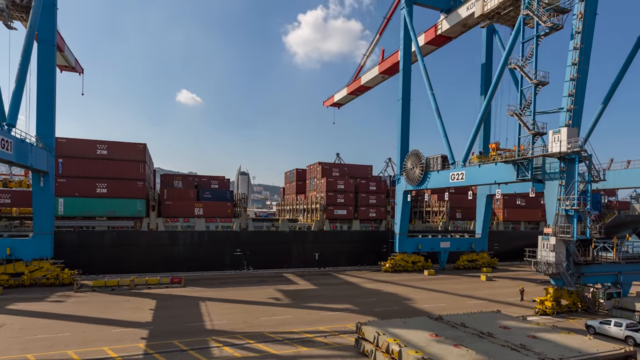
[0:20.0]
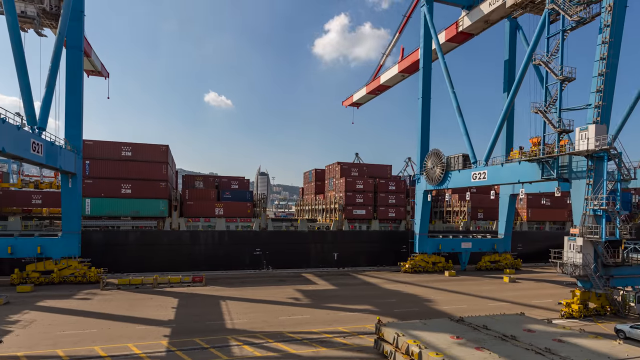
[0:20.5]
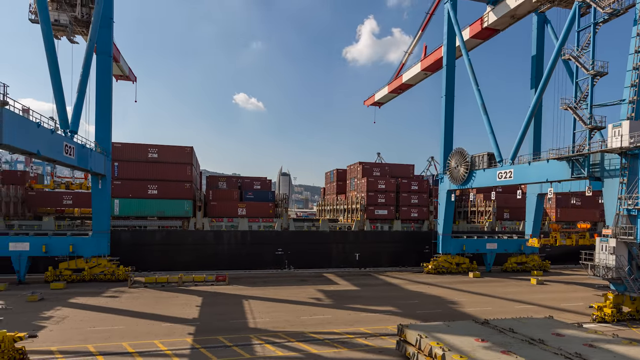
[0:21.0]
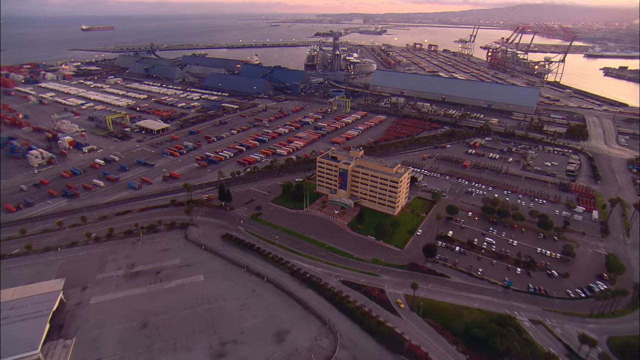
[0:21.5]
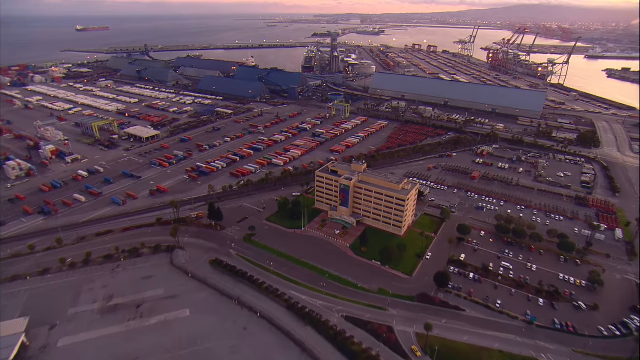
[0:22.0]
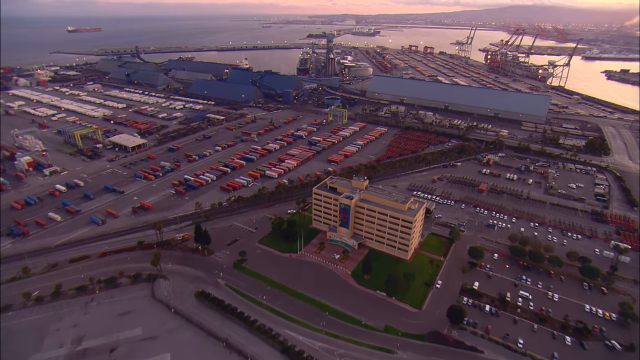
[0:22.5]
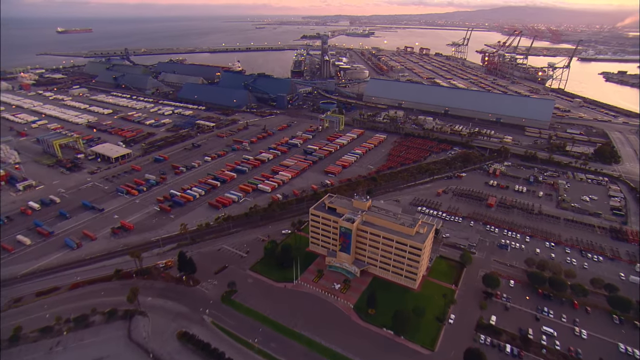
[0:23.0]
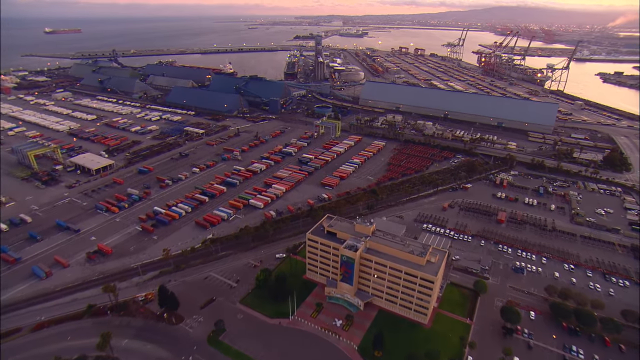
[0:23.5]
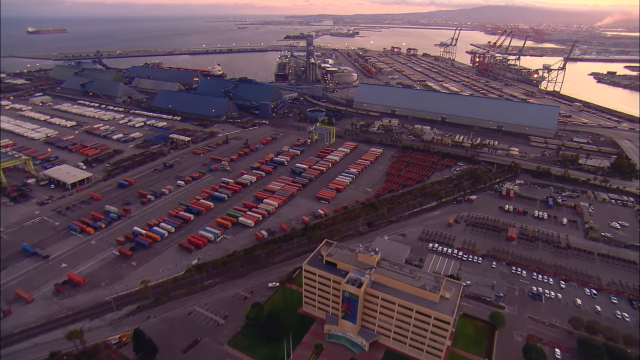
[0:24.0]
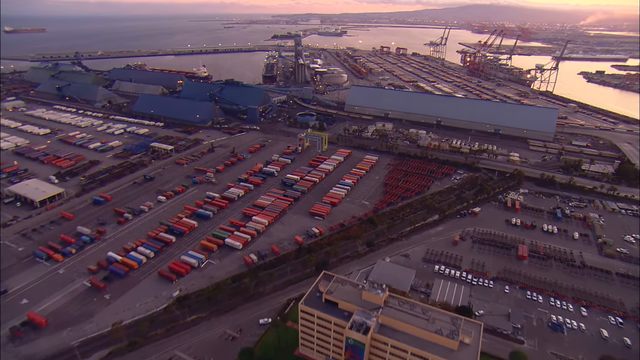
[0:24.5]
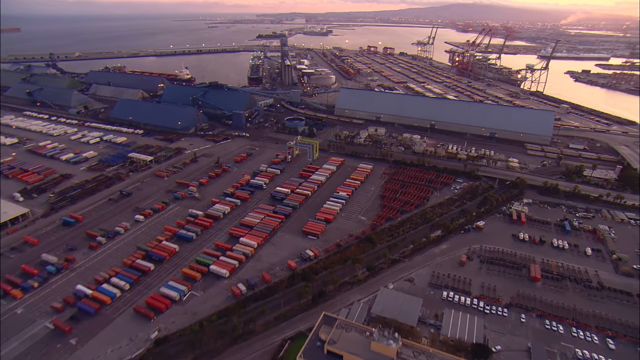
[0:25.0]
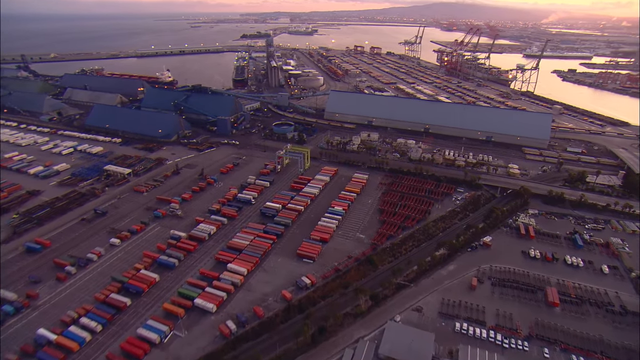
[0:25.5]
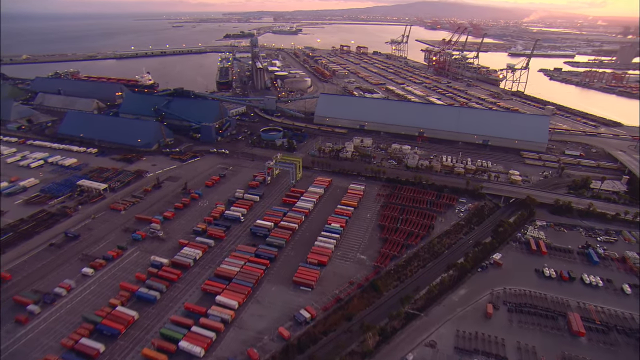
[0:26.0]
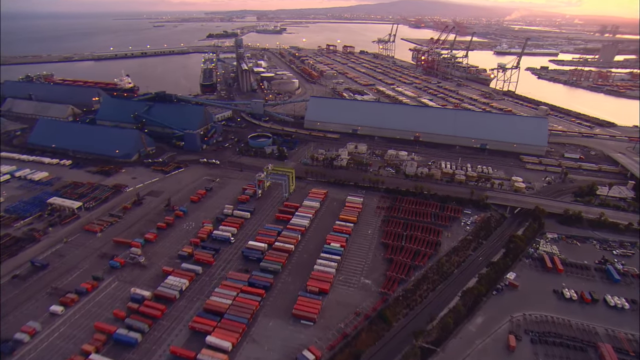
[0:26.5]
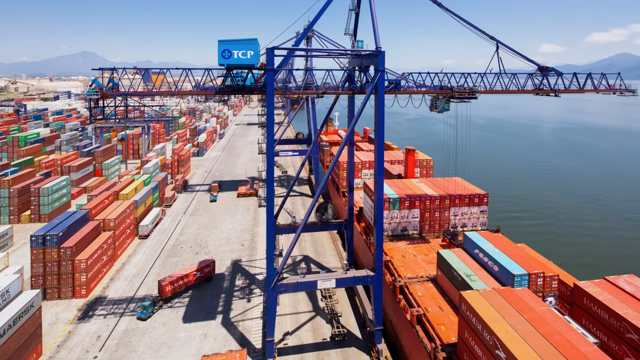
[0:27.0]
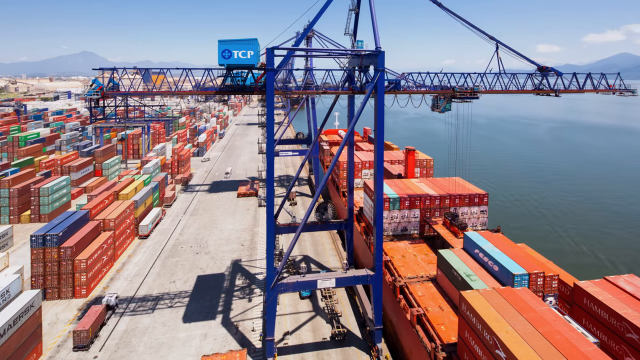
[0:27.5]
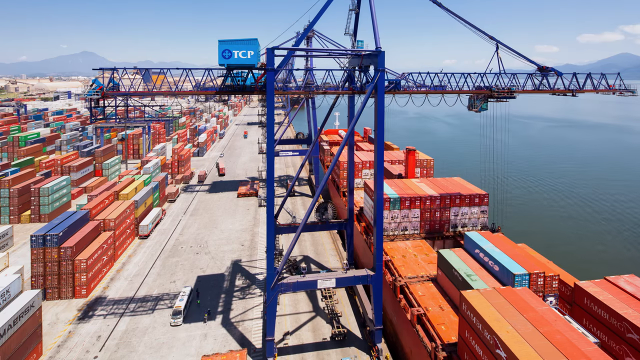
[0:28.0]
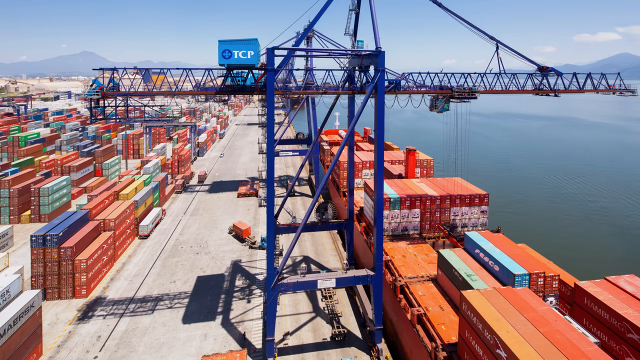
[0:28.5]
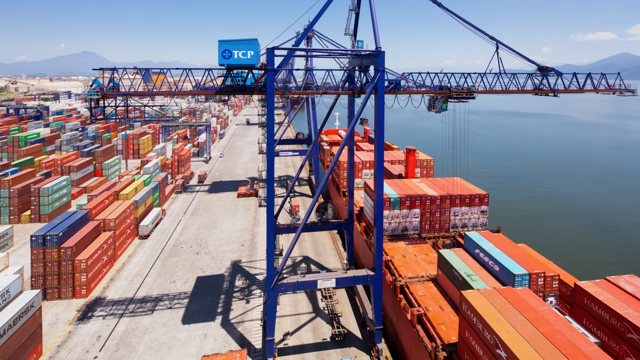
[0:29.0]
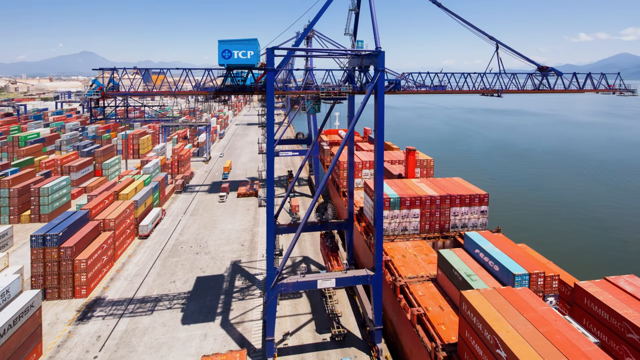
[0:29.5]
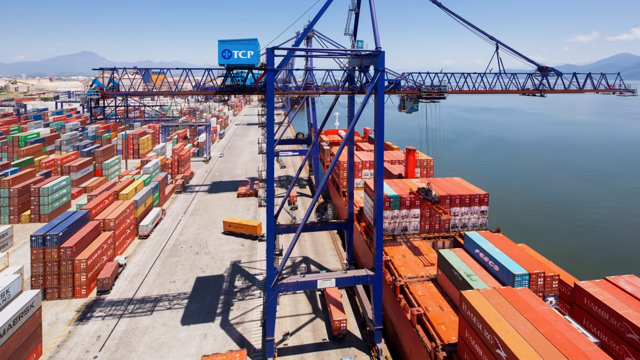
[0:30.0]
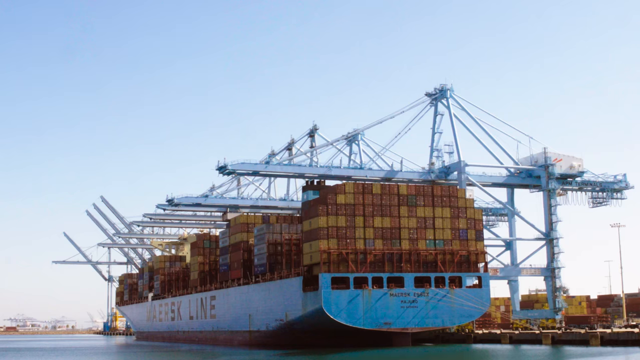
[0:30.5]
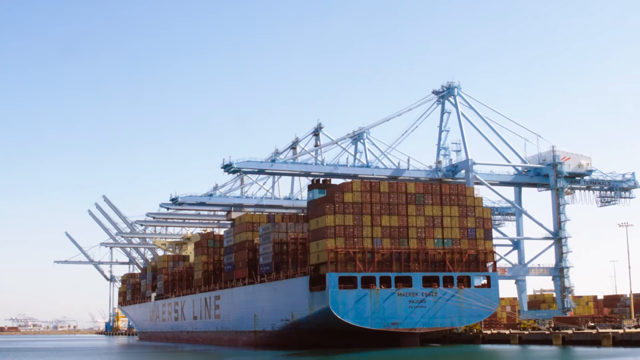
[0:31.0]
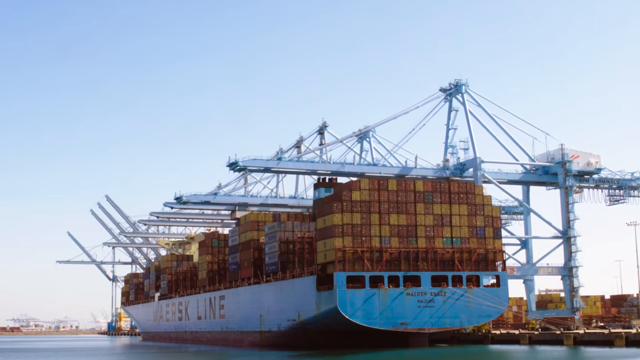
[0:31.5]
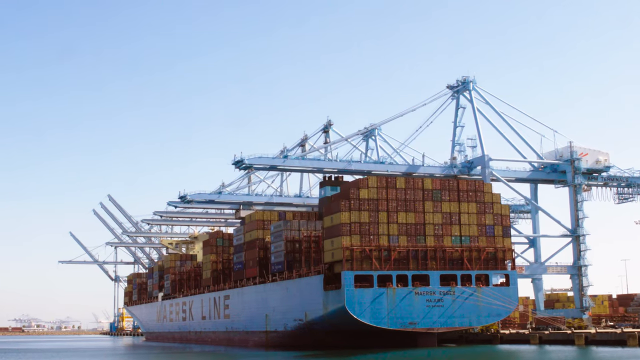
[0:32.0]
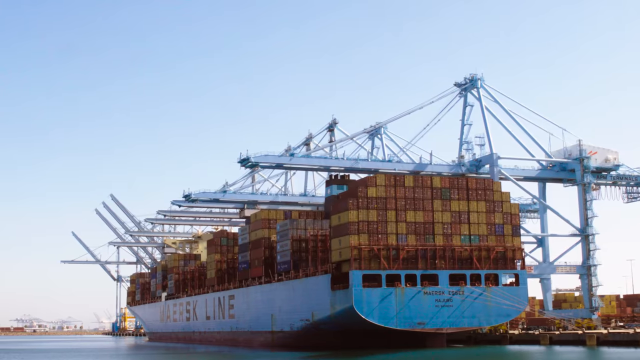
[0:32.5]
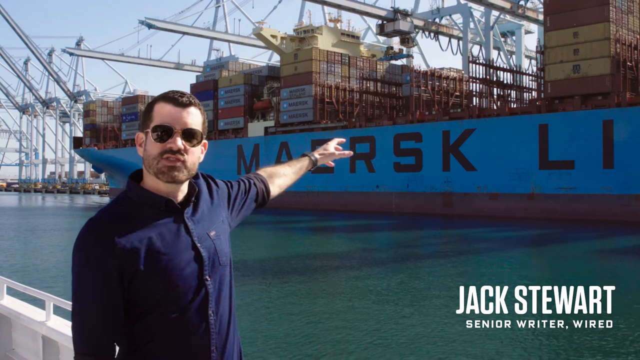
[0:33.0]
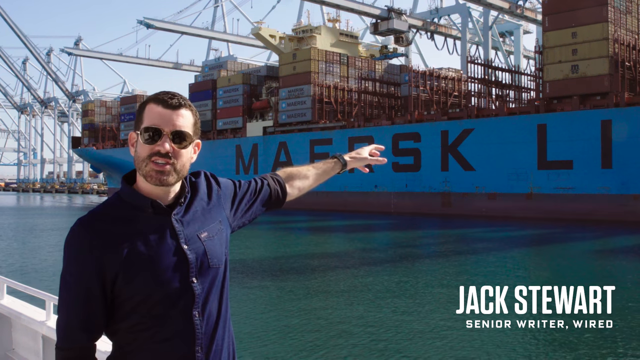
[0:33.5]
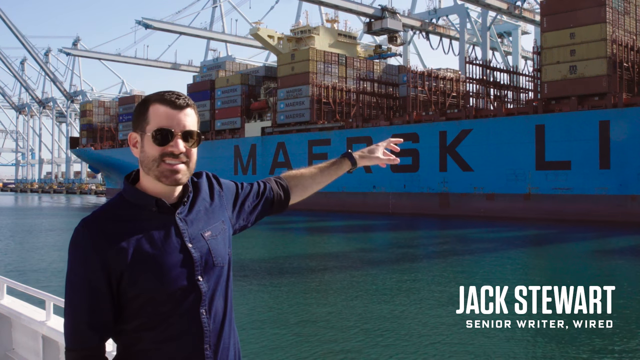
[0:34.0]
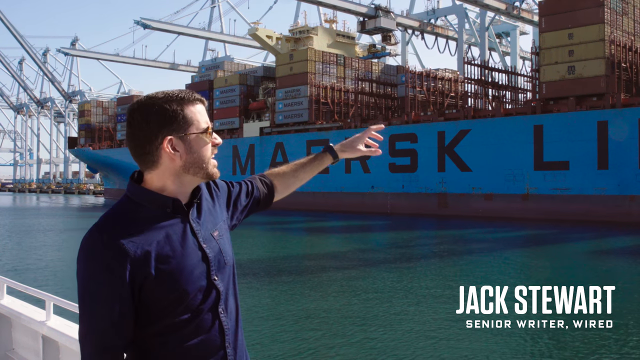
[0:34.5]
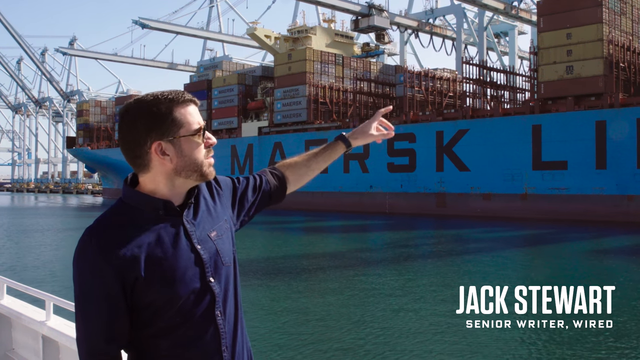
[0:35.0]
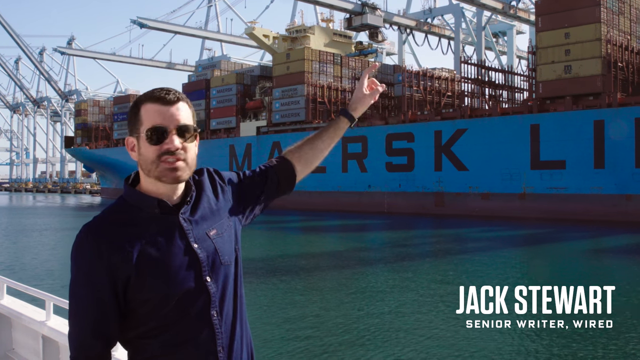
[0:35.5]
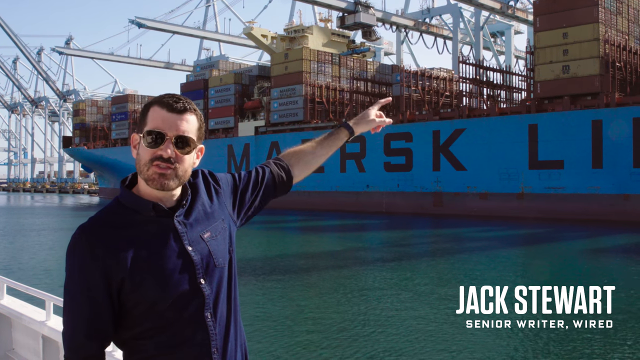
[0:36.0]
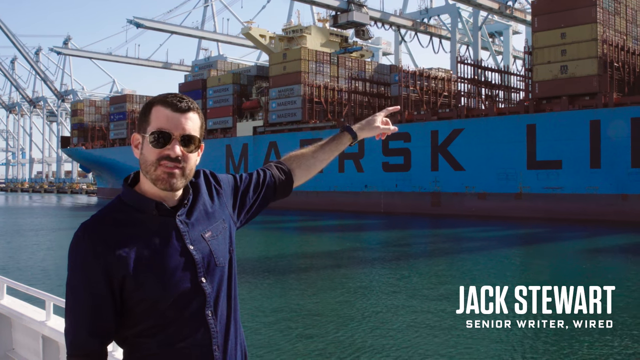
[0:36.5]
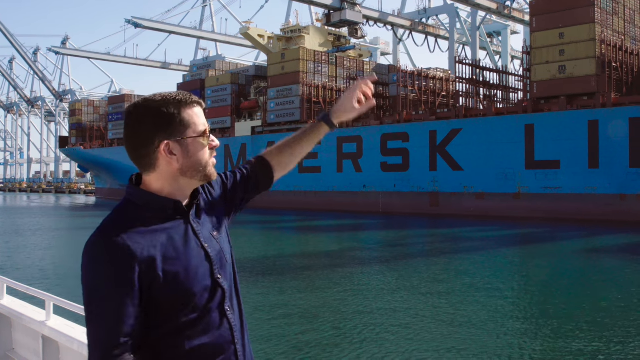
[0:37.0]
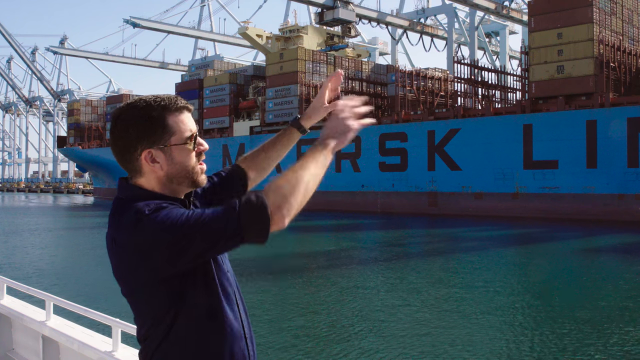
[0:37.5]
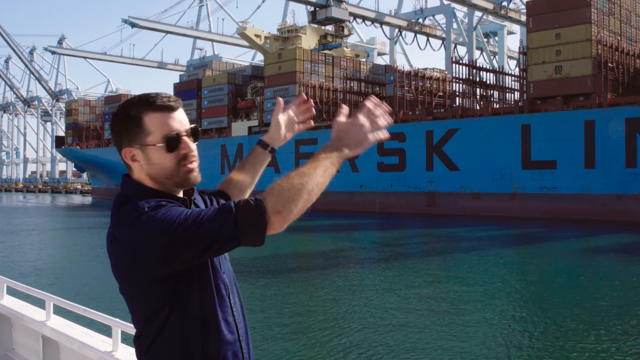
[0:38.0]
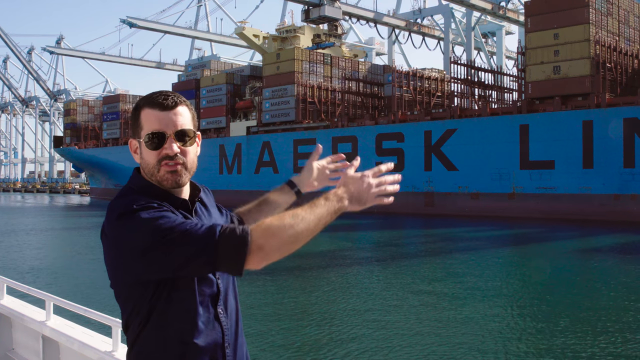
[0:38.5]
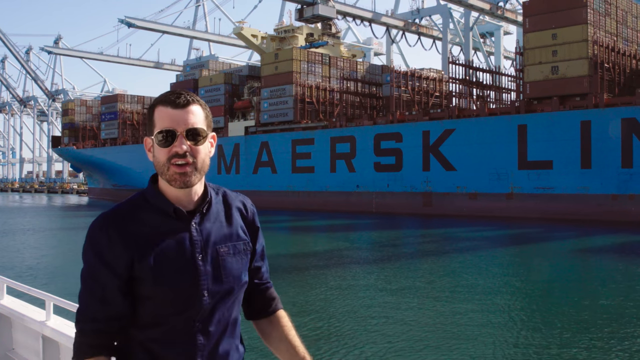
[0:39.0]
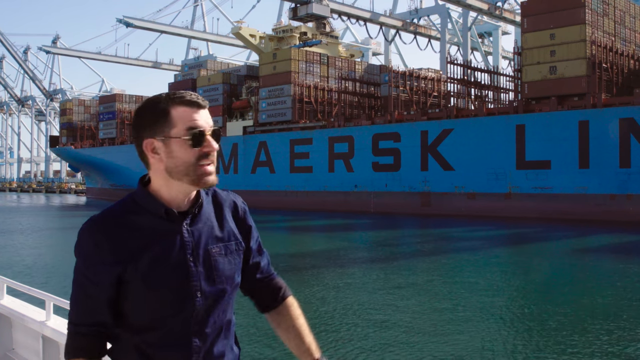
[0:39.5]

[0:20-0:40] Back outside, the huge blue cranes are shown. The view flies over the port, probably from a helicopter or an airplane, with a building in the foreground. What look like several containers are parked like cars on the ground. At the dock, a container ship is pulled up, and a giant blue crane lifts out over the boat, hooks onto containers and pulls them off the ship. The containers on the ship are stacked like Legos, very tightly fit together, filling up quite a bit of the top of the boat, about six containers high. A man stands next to the boat, appearing to be on another boat, and gestures at the giant blue container ship behind him as he talks; the ship says "Maersk Line" on its side. He wears a purple button-up shirt with the sleeves rolled up, glasses, and a wristwatch on his left wrist. At some point his name flashes across the lower right corner of the screen: "Jack Stewart," with the title "Senior Writer at Wired Magazine."